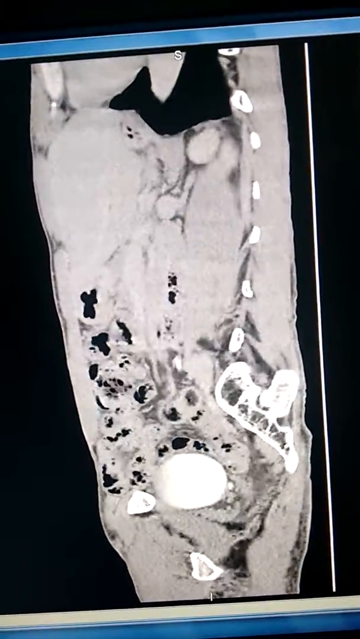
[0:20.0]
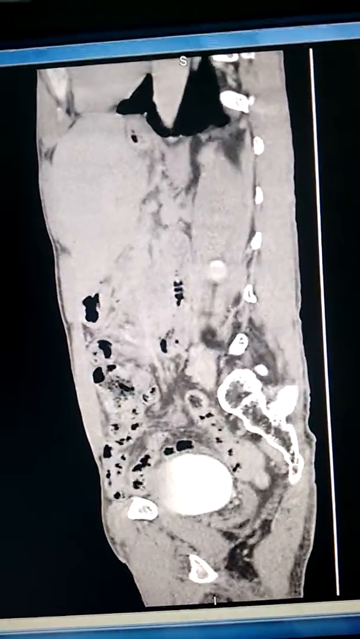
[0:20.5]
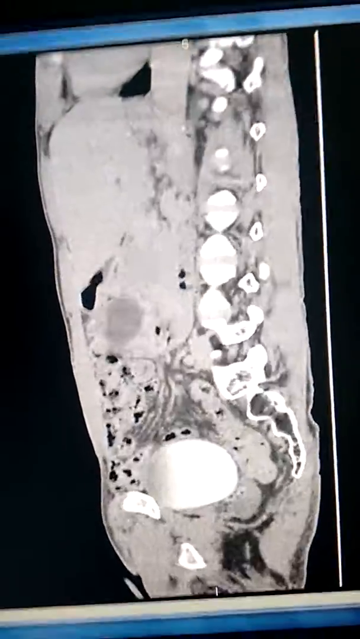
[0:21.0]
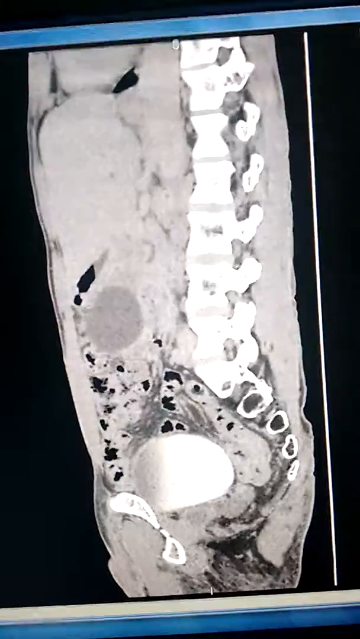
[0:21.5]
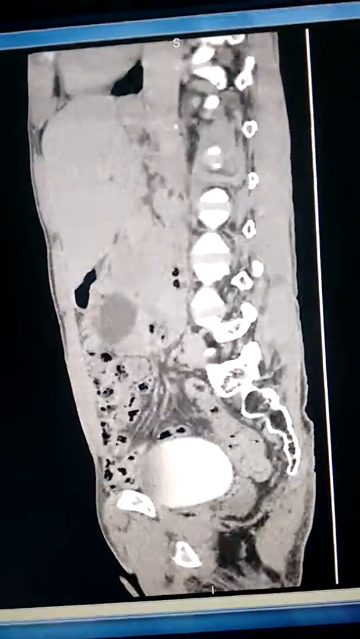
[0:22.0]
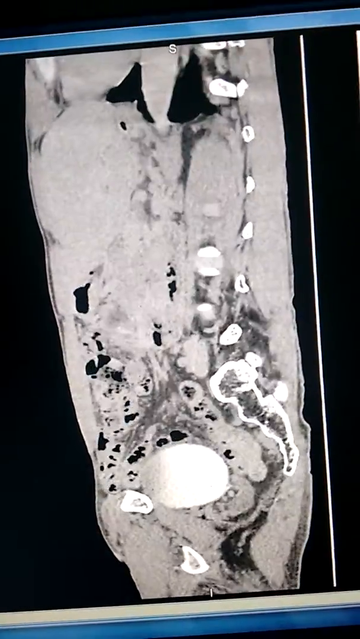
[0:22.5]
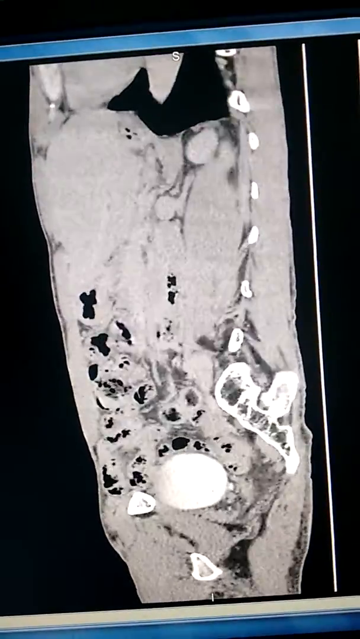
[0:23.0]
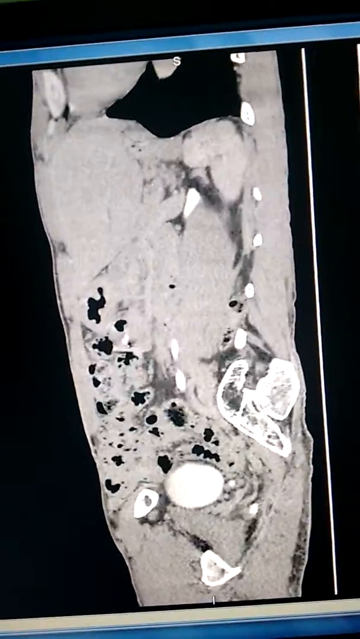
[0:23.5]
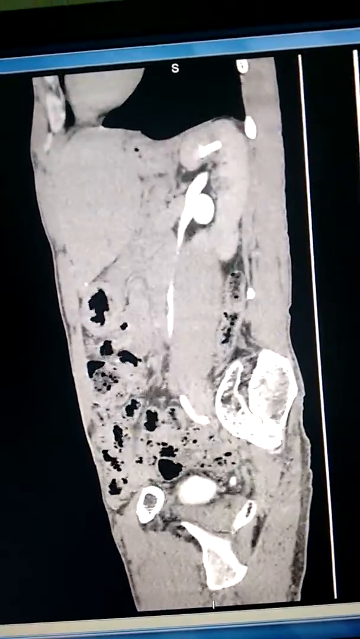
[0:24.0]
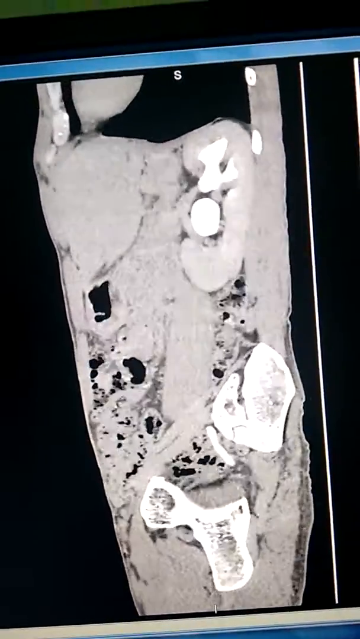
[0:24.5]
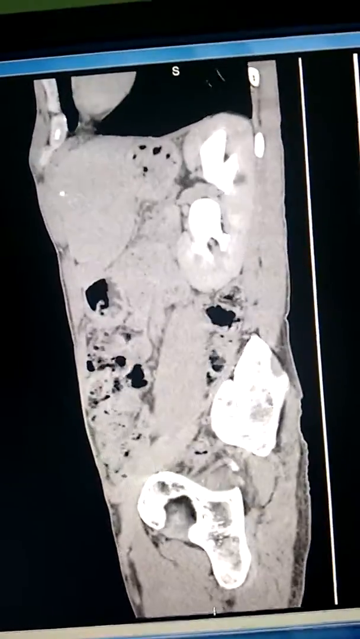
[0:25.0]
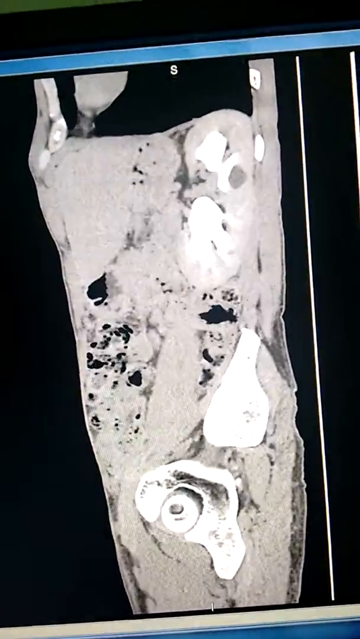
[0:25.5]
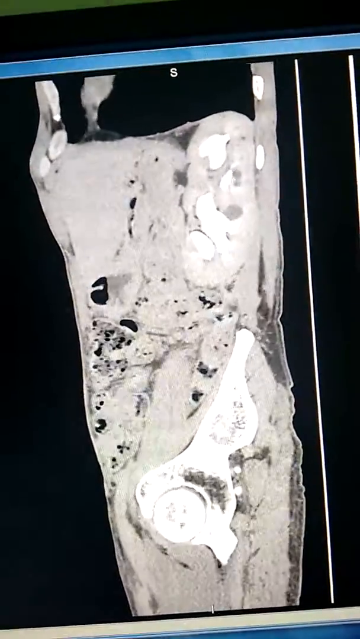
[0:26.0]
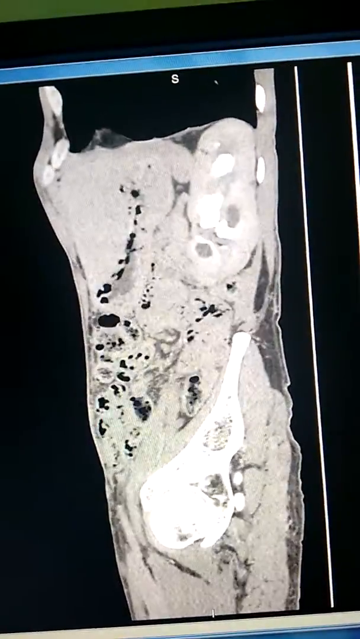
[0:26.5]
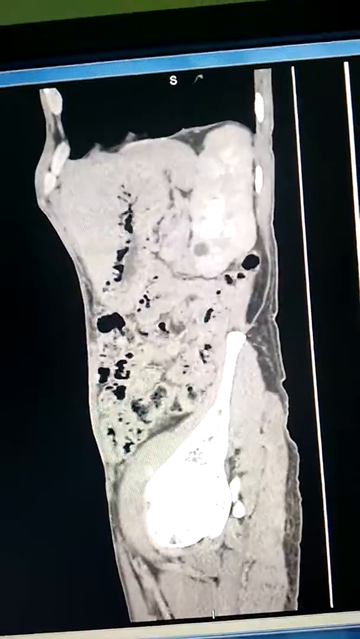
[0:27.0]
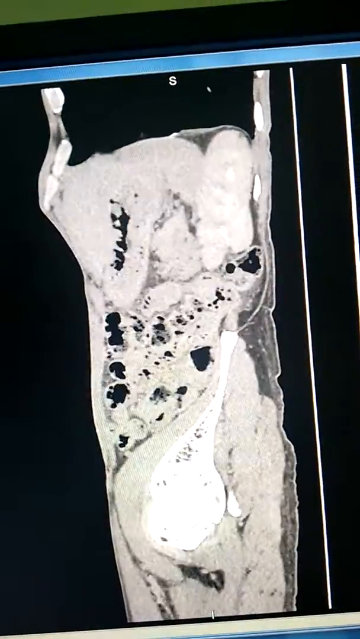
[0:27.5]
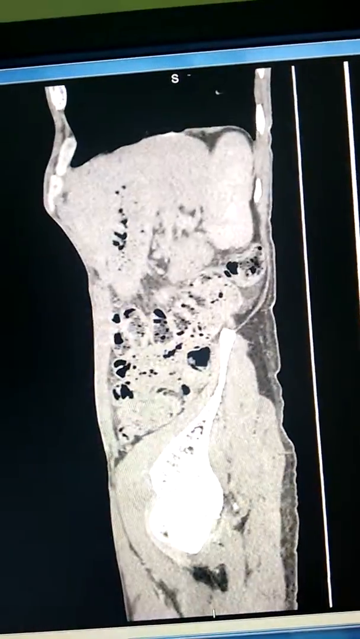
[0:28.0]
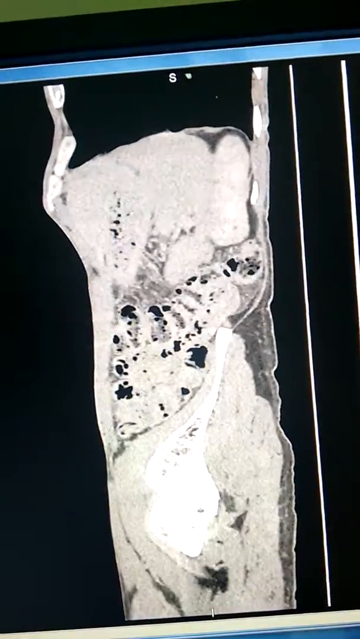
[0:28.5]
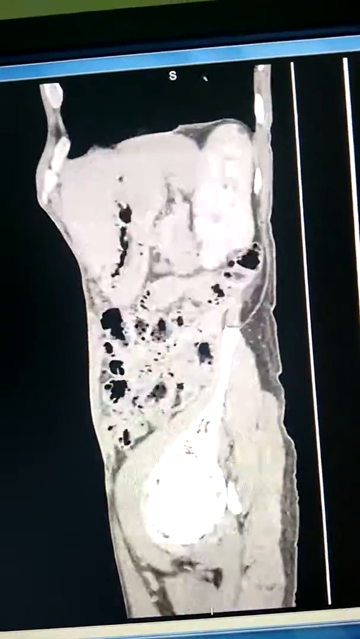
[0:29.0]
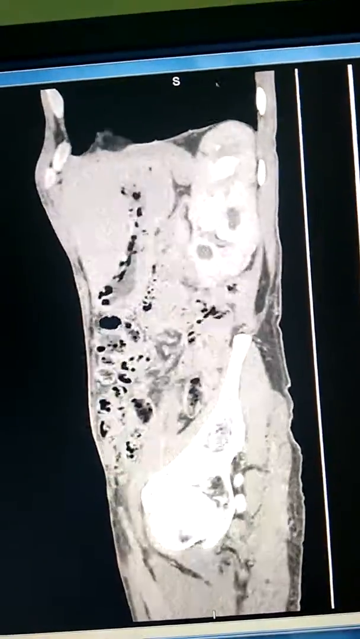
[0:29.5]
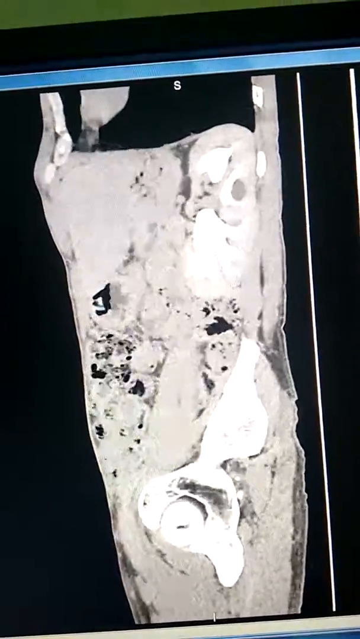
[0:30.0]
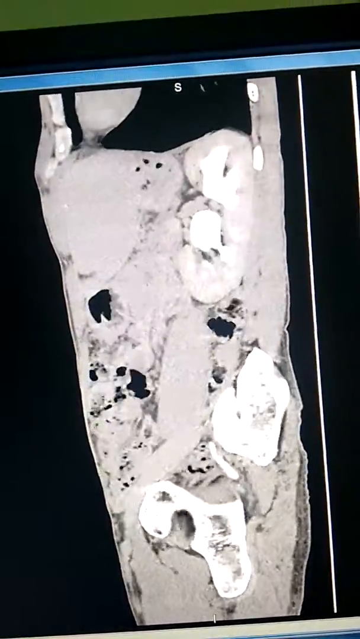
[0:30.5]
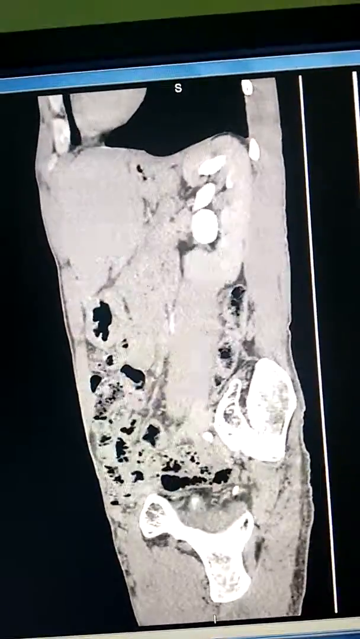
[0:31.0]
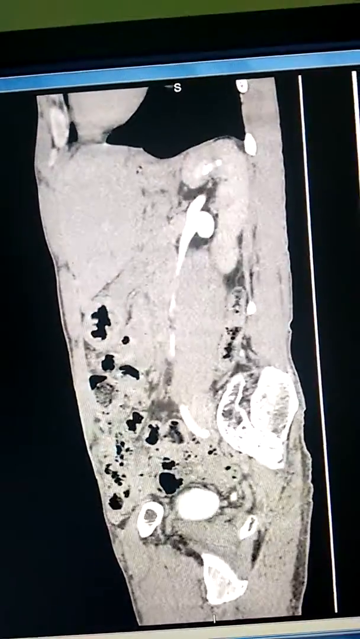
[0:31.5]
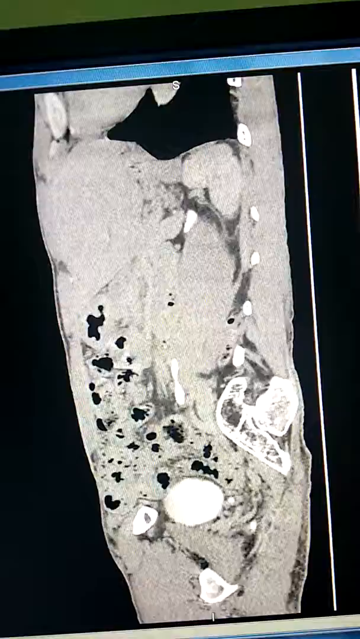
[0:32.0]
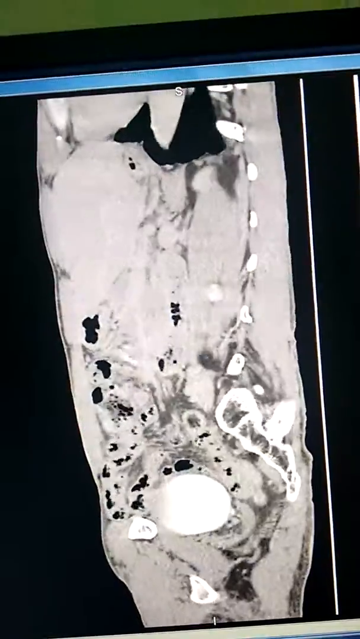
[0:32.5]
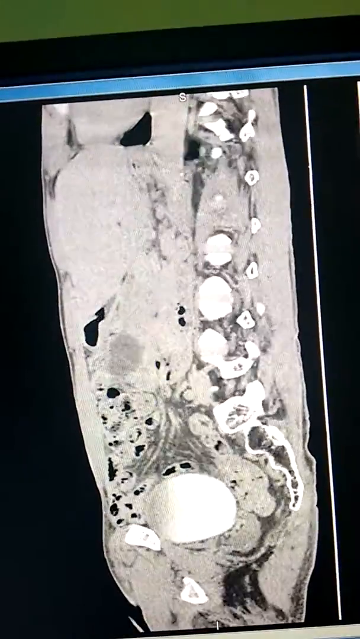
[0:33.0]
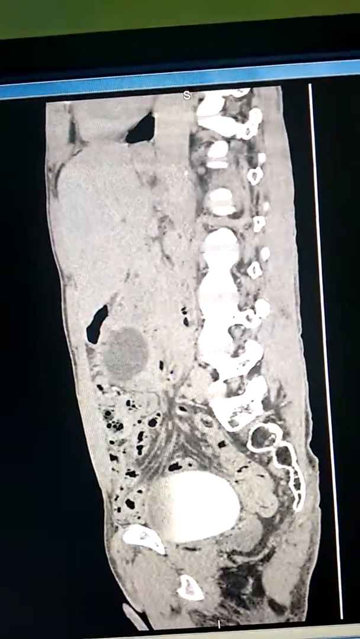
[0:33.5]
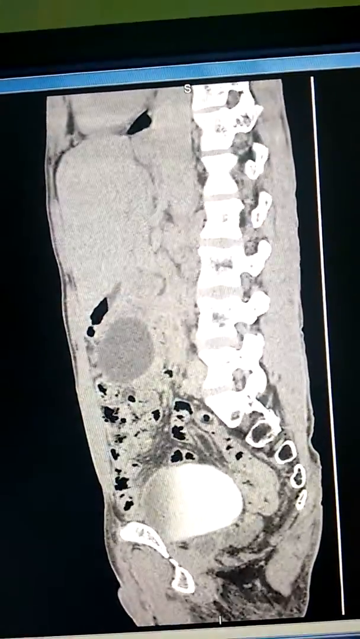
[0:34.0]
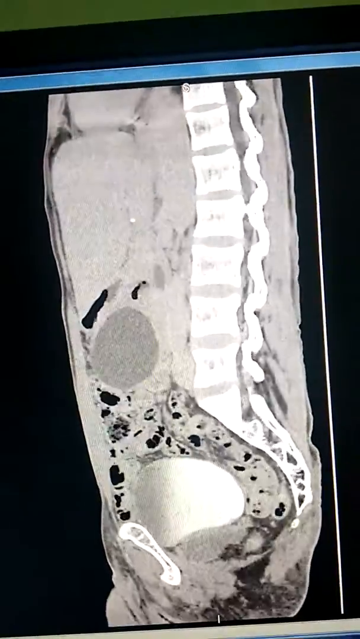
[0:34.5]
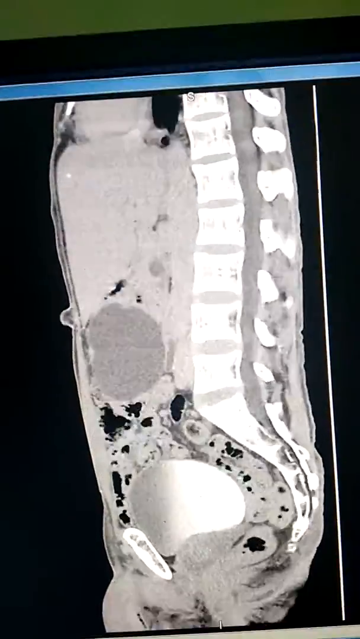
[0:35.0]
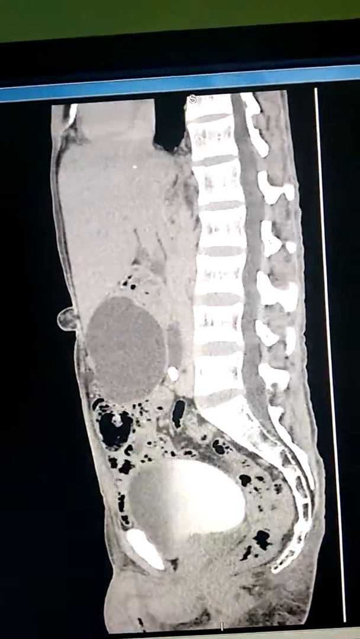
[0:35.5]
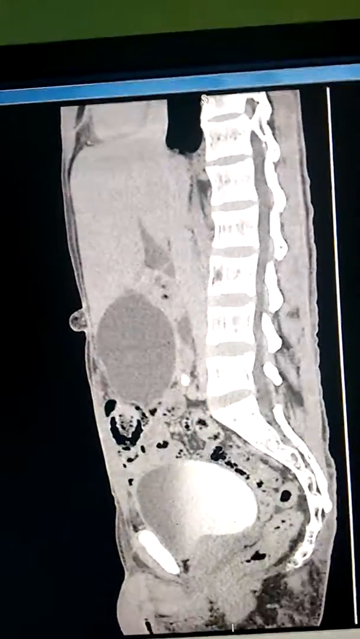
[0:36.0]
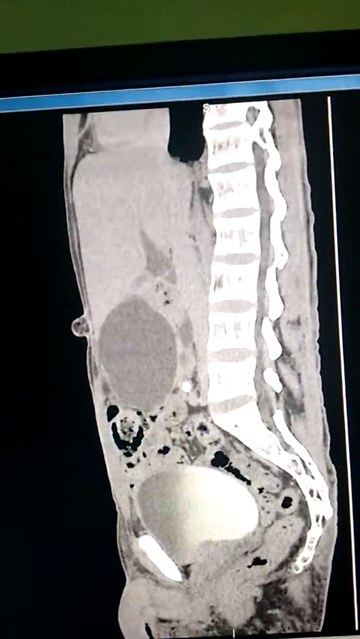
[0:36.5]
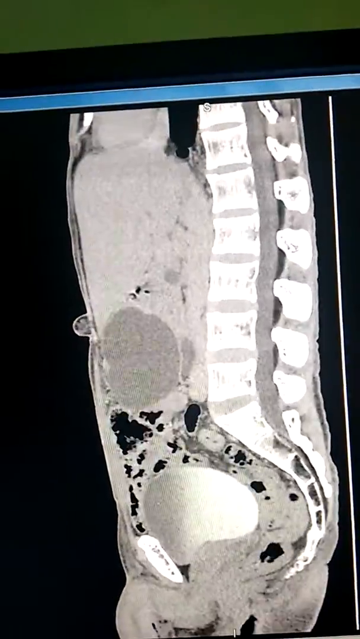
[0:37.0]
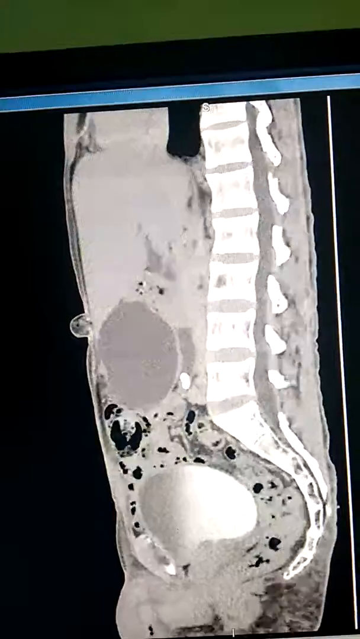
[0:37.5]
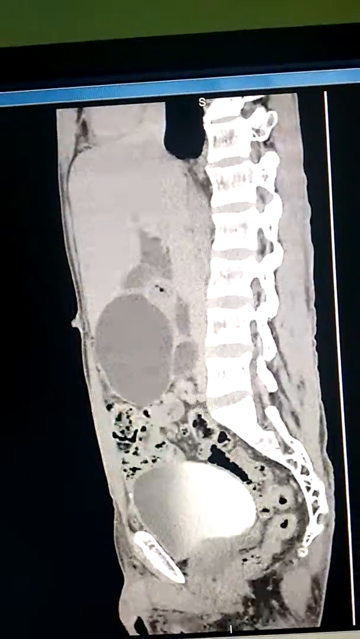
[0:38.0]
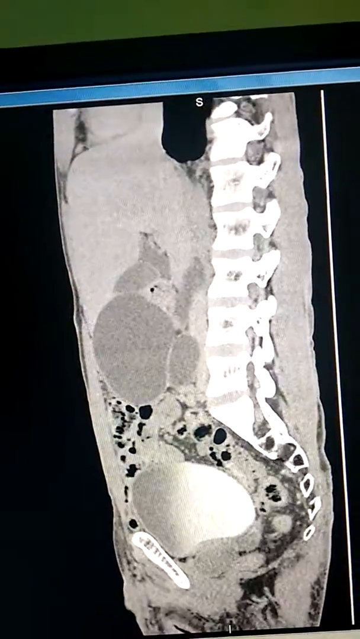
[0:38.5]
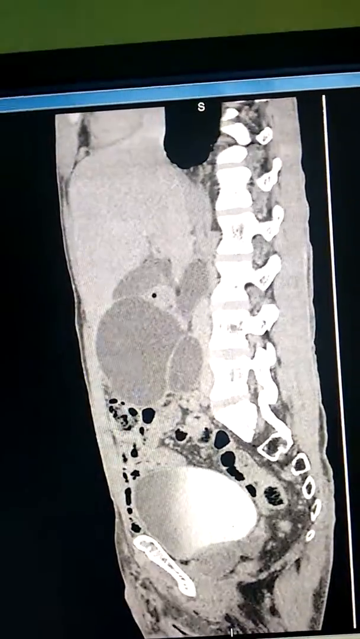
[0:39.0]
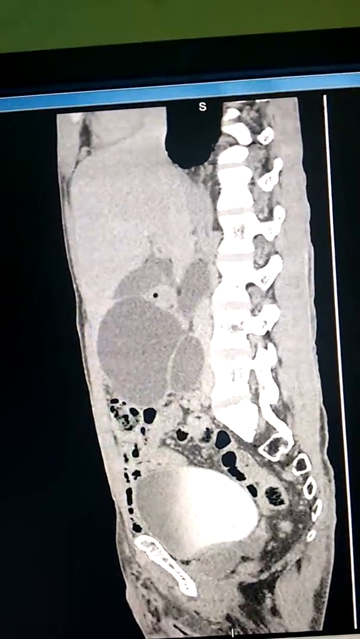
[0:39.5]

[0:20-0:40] A recording of a screen shows what looks like it could be someone's leg or arm, a long area that is a bit on the shorter side. A sort of lateral spine comes into view, so it seems to be the lateral part of the abdomen: the scan appears to go through muscle and then arrive at the spine. The tailbone curls to the right, apparently indicating the left side of someone's abdomen. A small spine is visible, and as the exam goes along the spine starts disappearing. It could possibly be mainly a spinal exam. The bones are whiter while the rest is gray, and there are some black spots inside the abdominal scan.